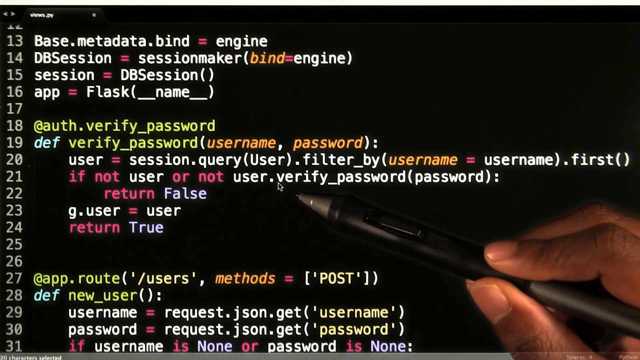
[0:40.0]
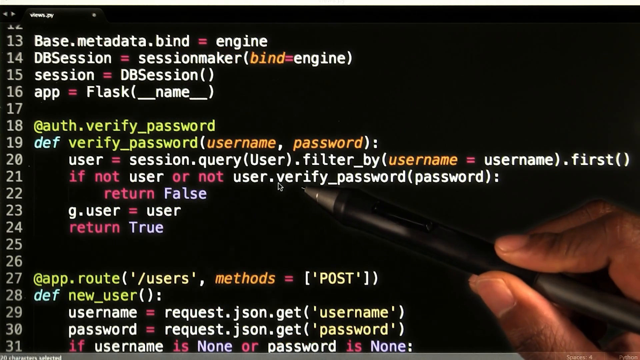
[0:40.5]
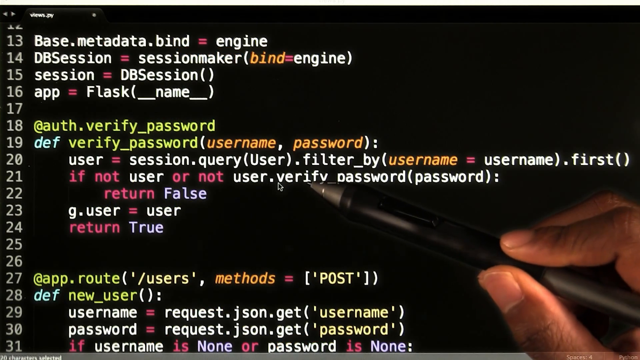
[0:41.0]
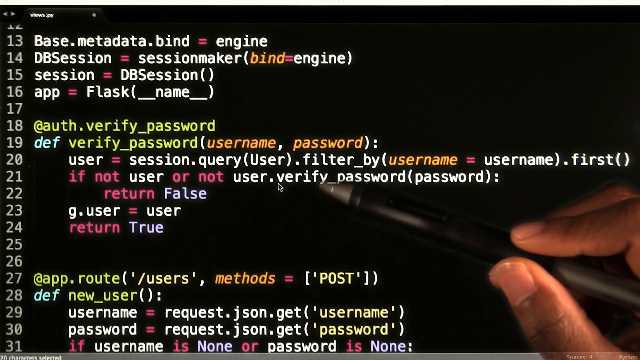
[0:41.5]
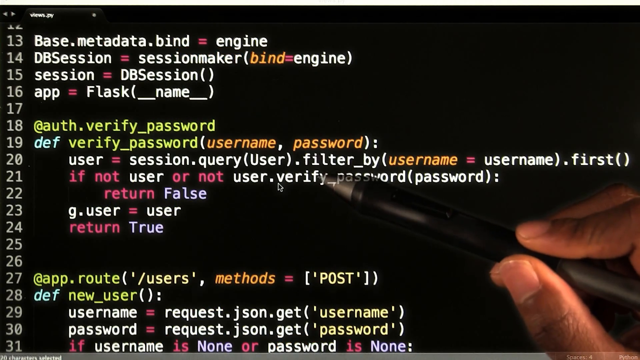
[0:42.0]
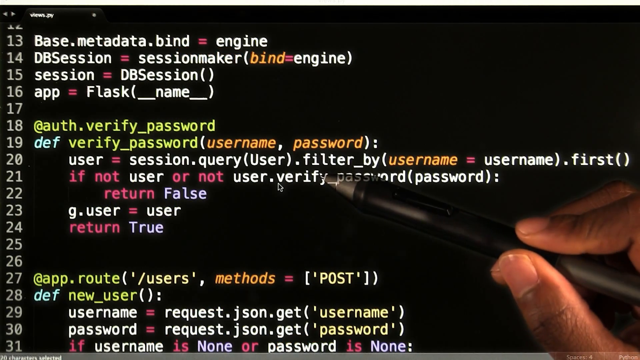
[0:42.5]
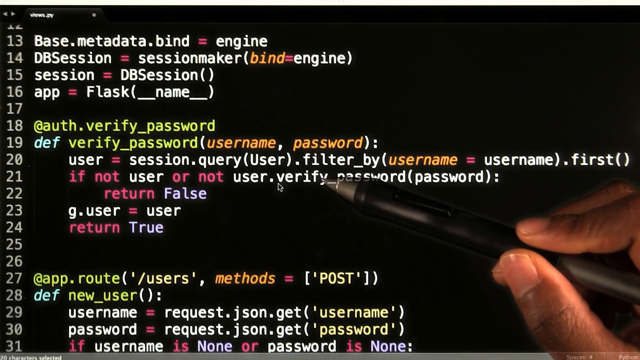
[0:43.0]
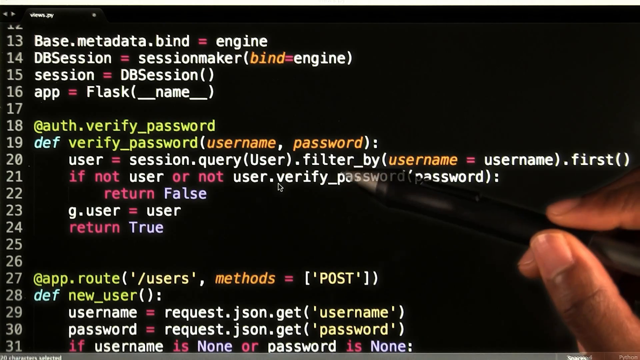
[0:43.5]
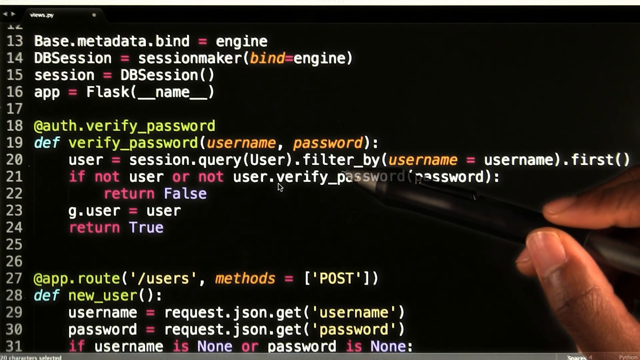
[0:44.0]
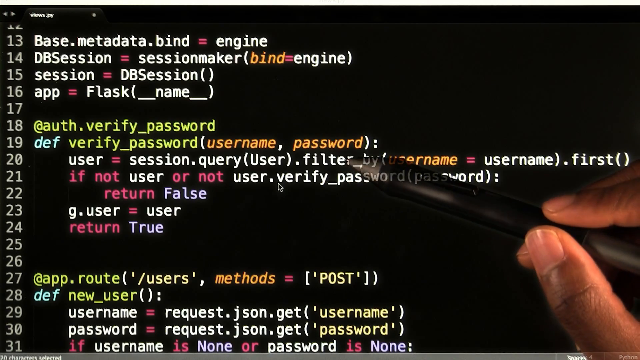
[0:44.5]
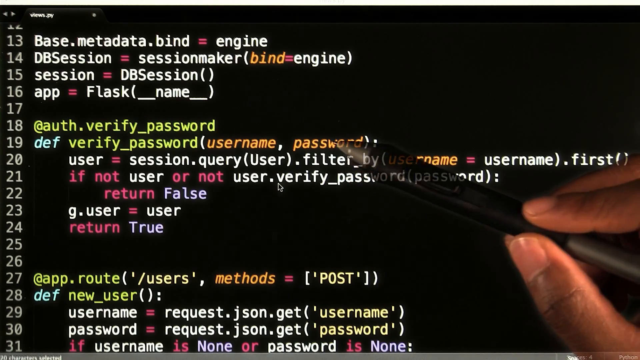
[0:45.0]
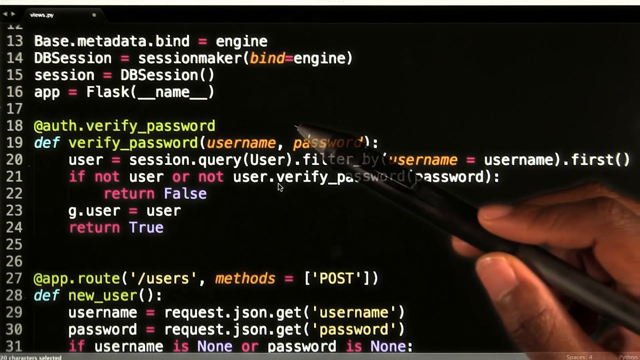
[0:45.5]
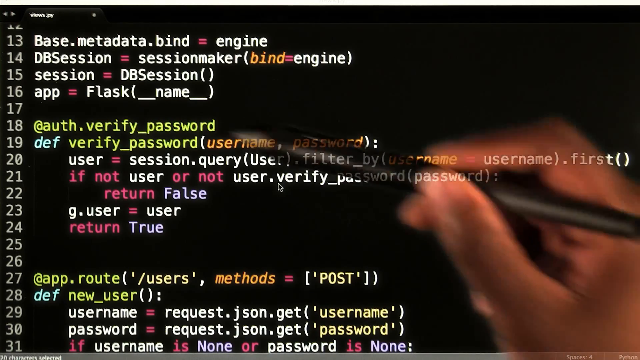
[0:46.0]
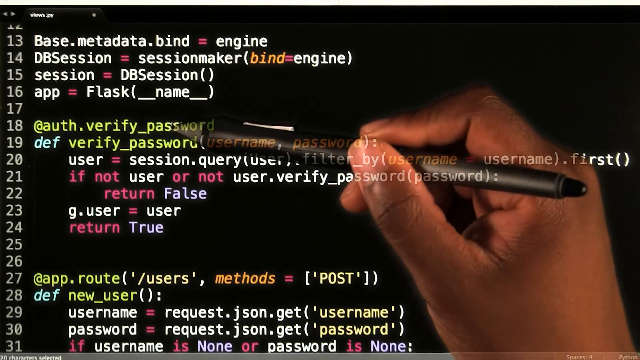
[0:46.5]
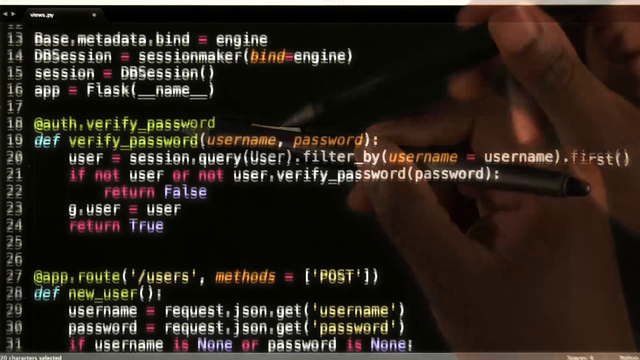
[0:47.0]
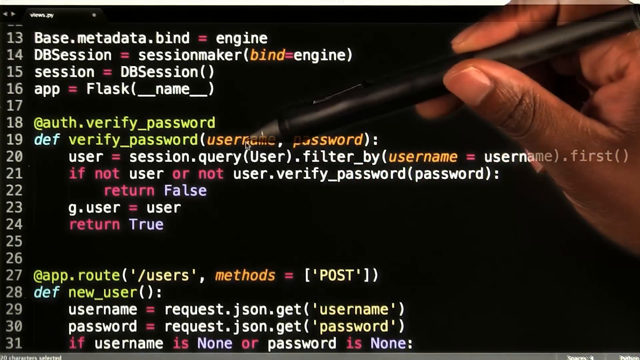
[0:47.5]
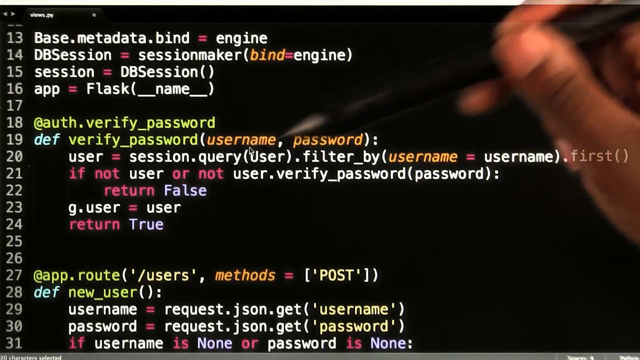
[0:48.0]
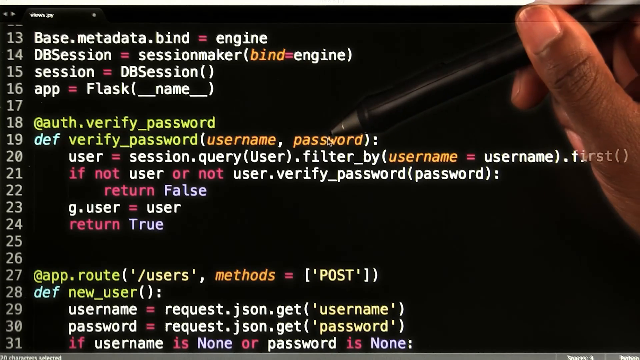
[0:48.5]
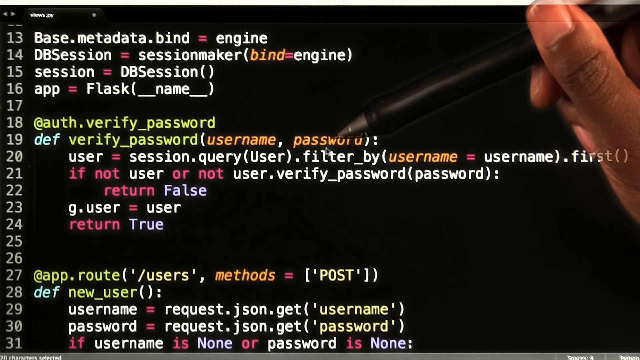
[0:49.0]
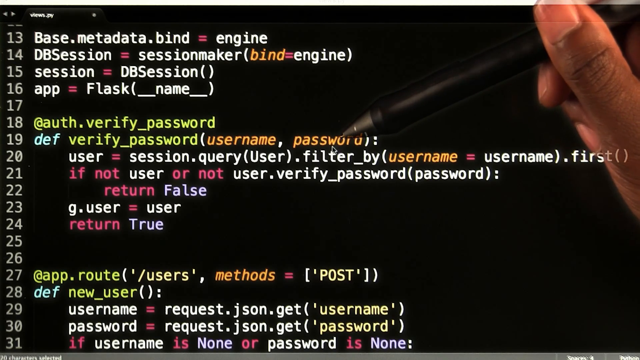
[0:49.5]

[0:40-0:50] On a black screen, a black pen is held by a hand of which only the three fingers clenching the pen are visible. The pen points straight underneath the word "Verity" on line 21. The visible lines run from half of line 12 down to line 30, with text in different colours, some in italic and some with brackets. The pen hovers over the word several times, then moves up two lines to hover over the word "password", moves left to hover over the word "username", goes back right to hover over "password" again, and then goes down underneath "Verity". It then returns to the top of line 19, wiggles around, and goes to line 22, which is blank, continuously hovering over lines 19 to 22 for several seconds.